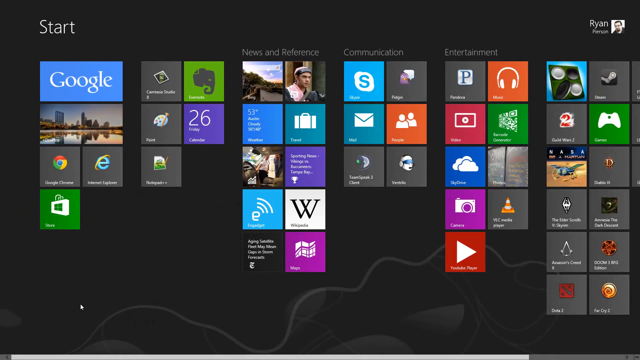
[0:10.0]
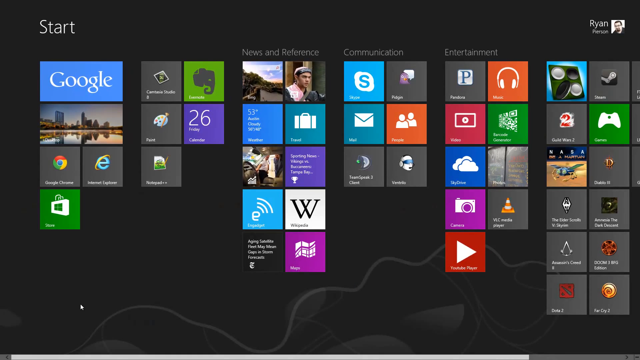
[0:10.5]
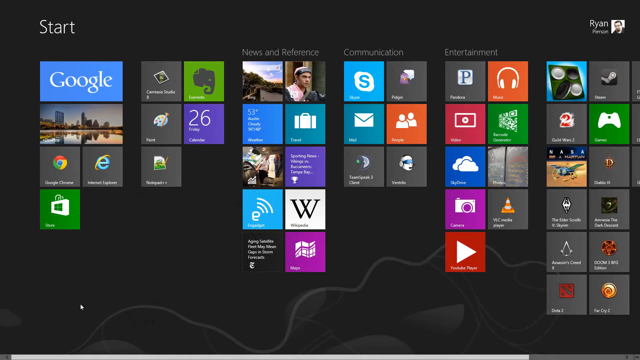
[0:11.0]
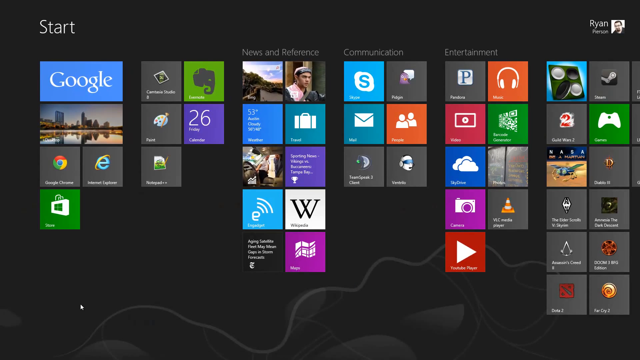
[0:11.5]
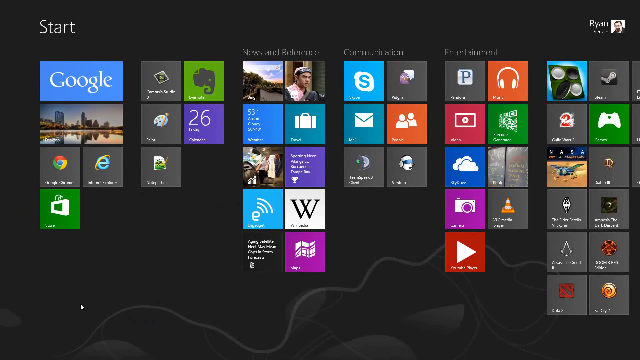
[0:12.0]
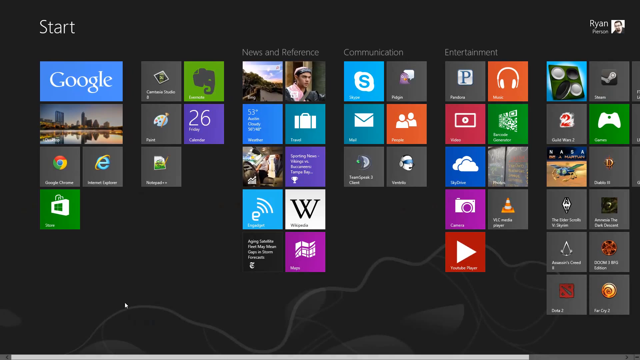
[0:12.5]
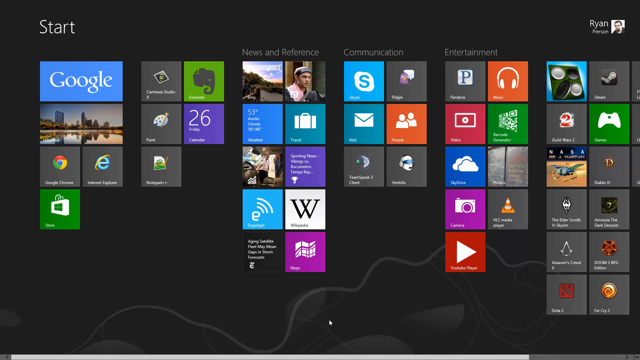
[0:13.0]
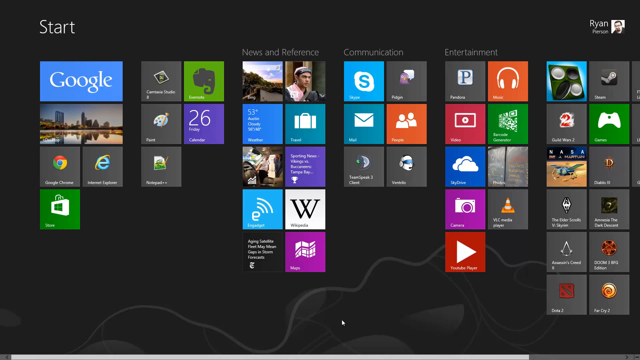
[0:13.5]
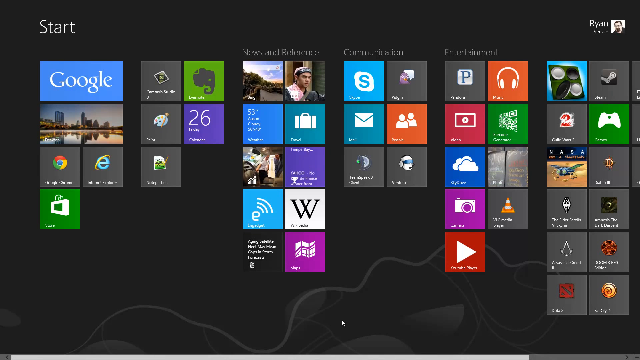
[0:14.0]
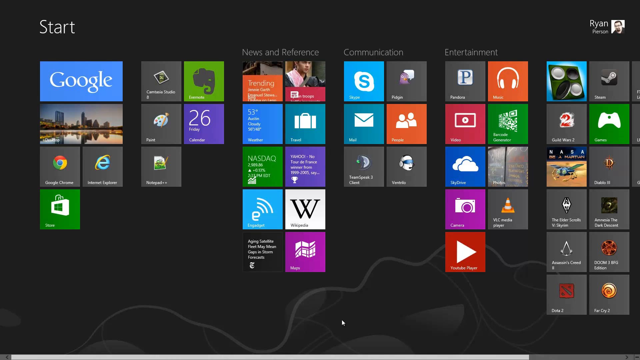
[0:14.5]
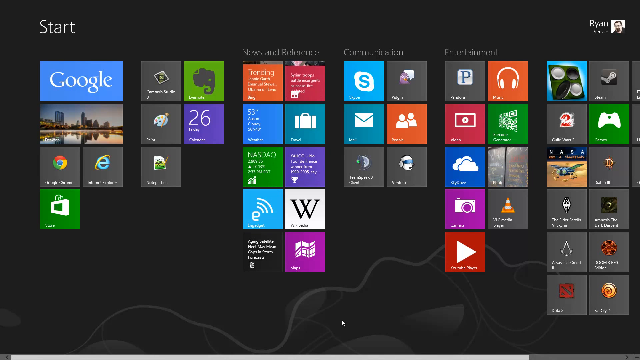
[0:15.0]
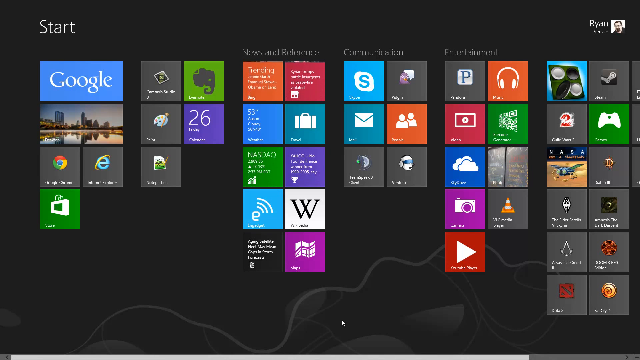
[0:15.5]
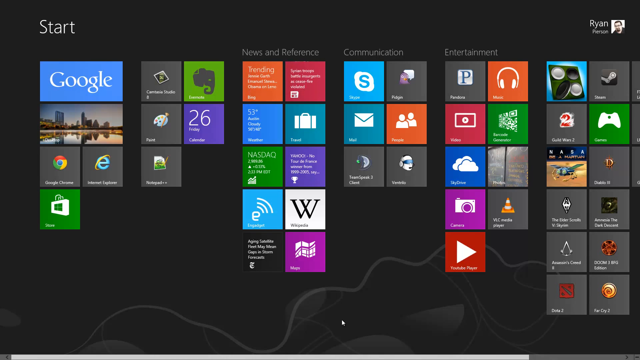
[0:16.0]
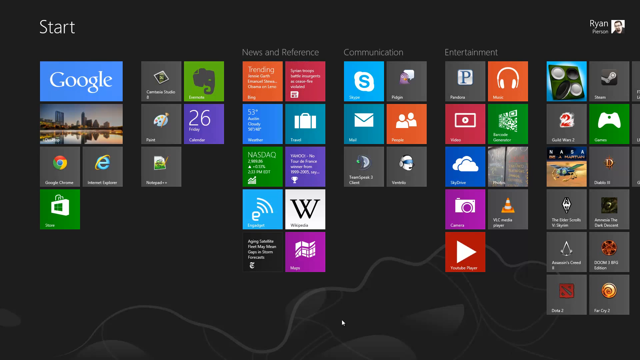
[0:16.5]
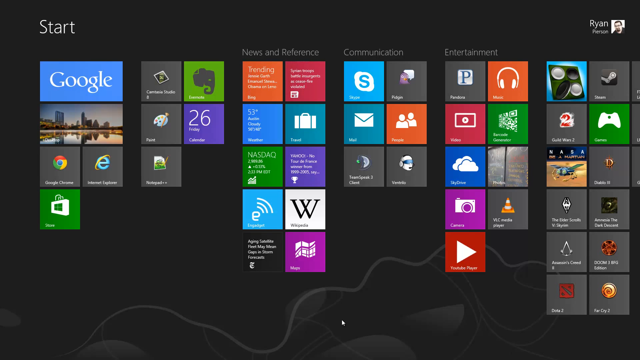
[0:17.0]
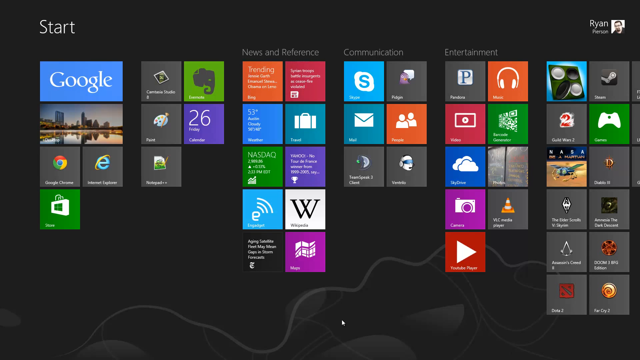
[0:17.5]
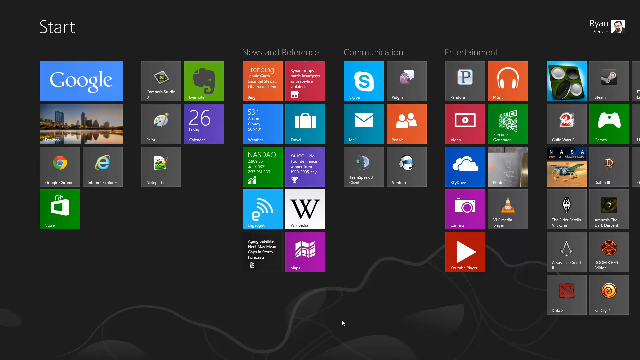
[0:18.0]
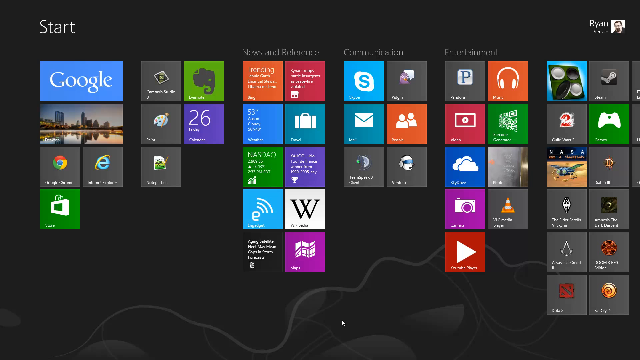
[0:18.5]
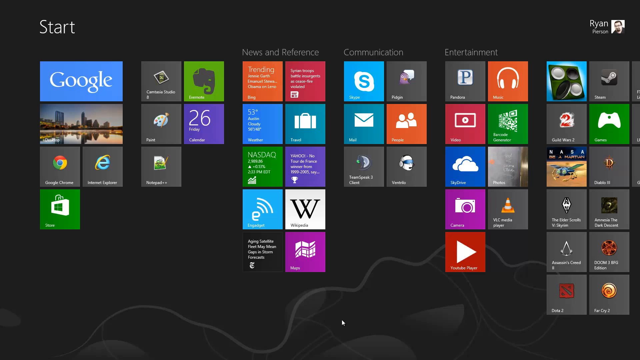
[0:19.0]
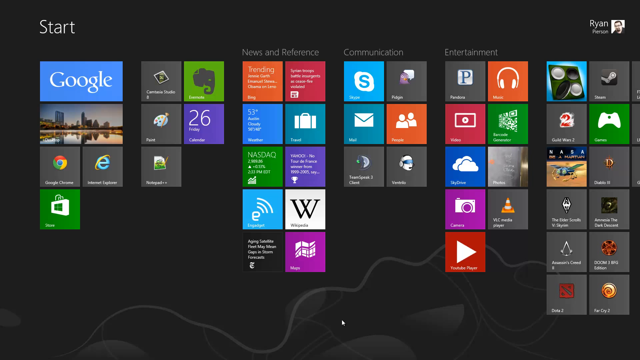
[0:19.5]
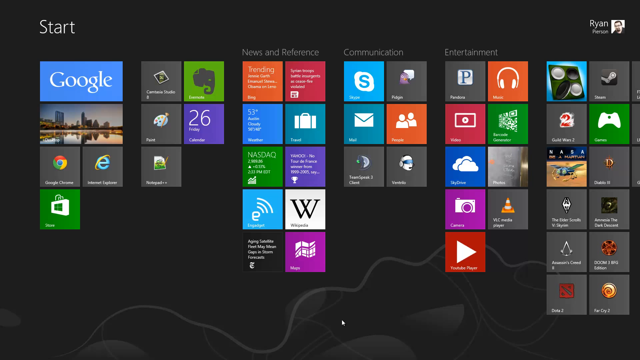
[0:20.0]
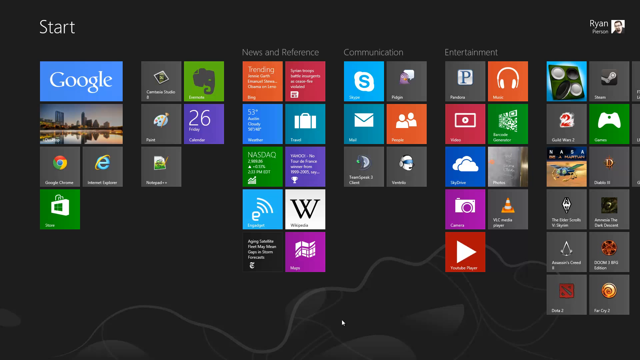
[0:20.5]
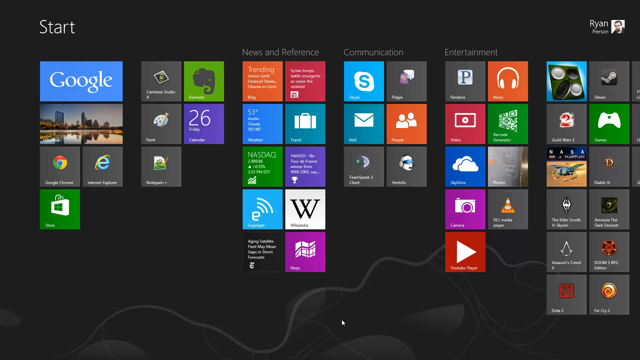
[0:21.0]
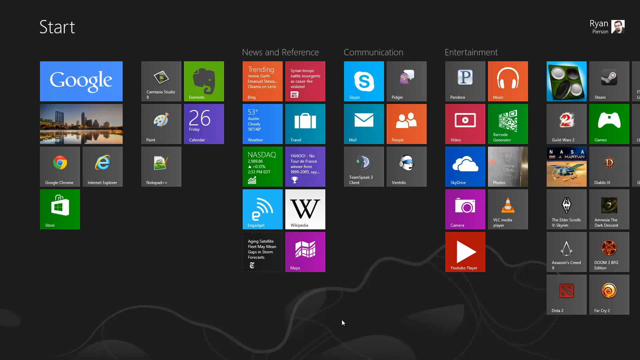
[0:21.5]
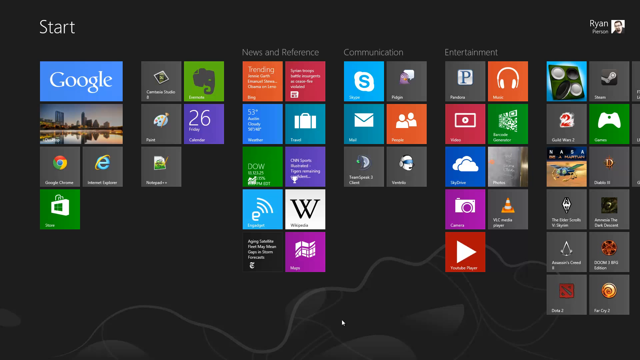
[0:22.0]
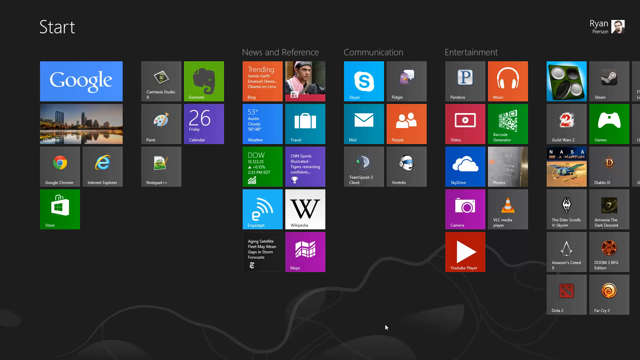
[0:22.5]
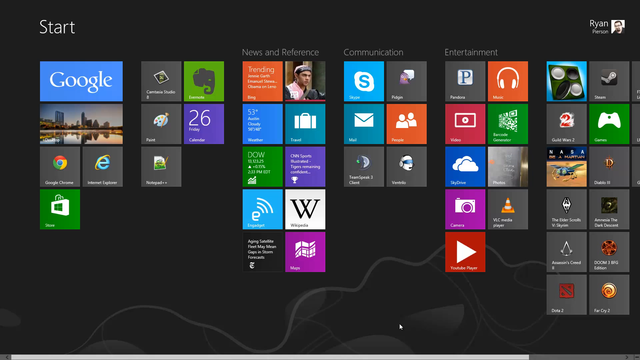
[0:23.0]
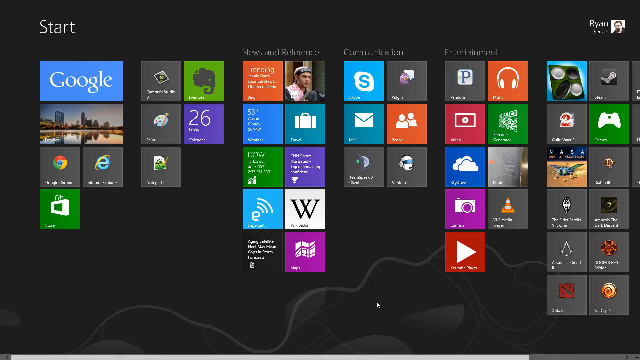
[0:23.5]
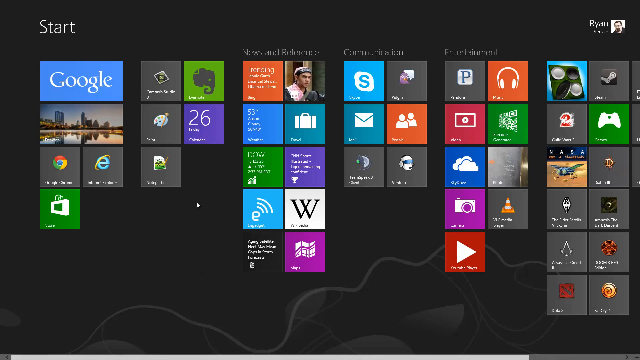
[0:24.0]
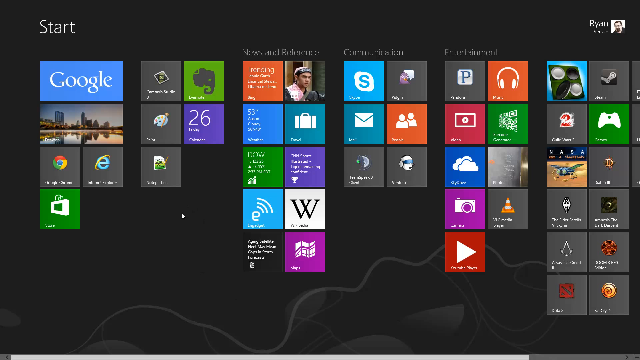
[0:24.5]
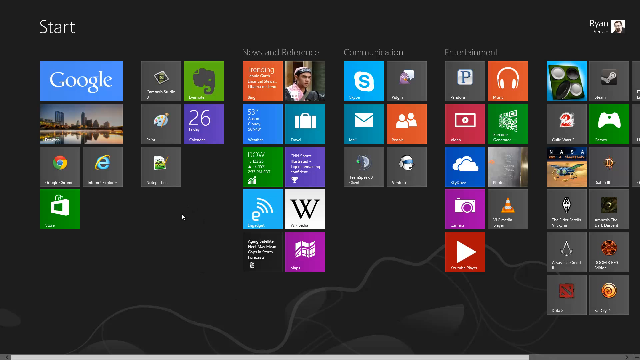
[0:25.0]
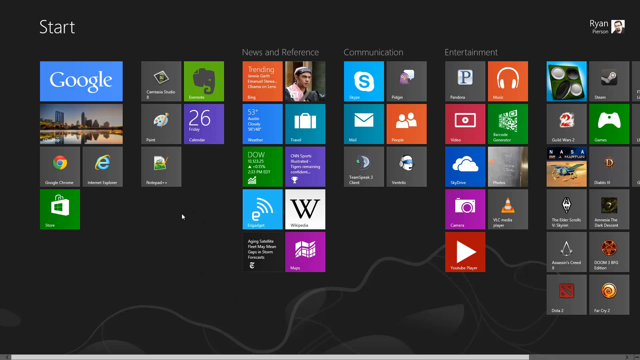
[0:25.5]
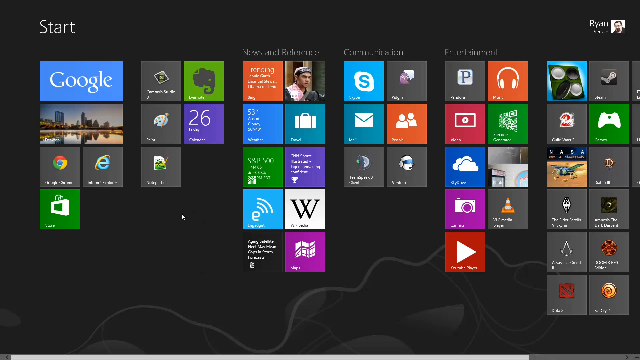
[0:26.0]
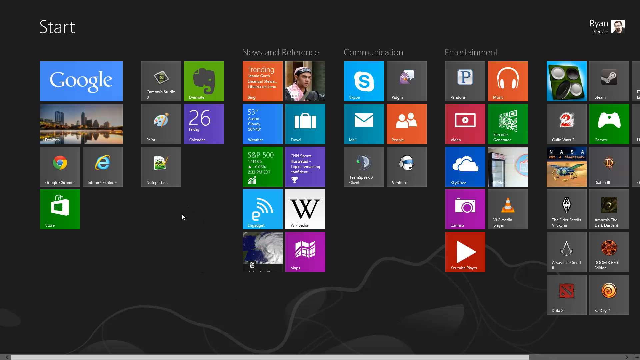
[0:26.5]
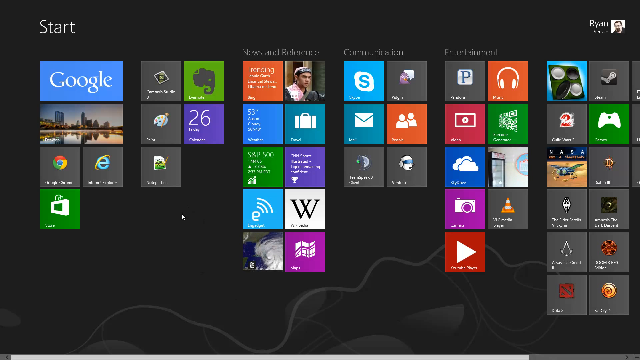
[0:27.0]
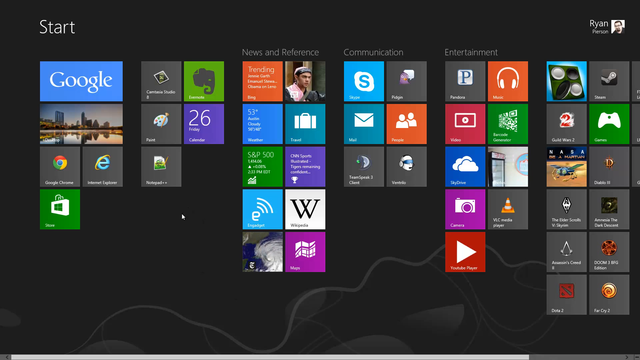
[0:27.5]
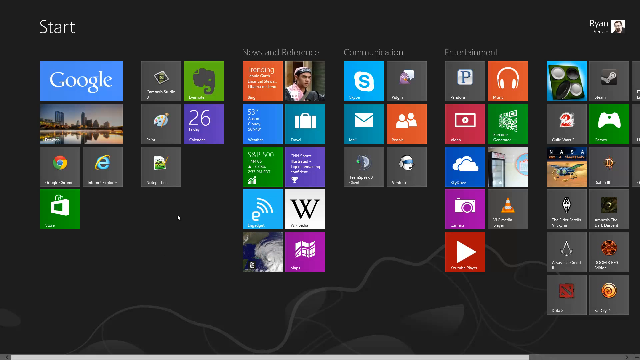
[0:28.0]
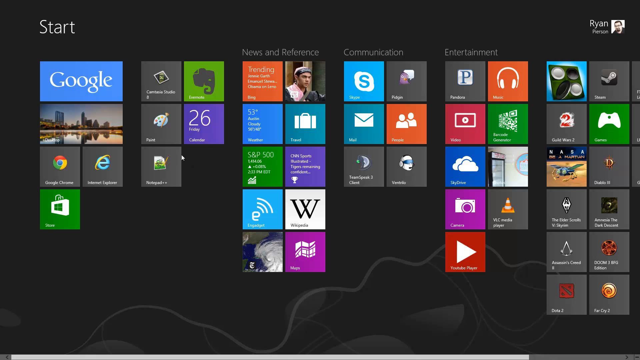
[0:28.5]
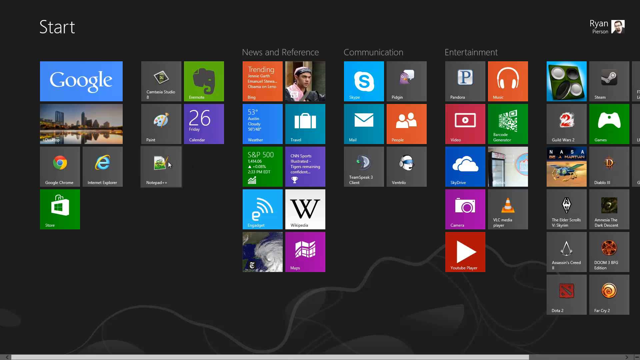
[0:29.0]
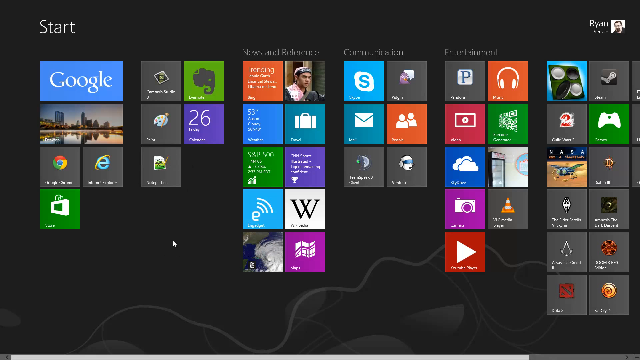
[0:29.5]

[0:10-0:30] The black screen with a huge array of different icons remains, with the profile name in the right-hand corner and "start" written in the top left corner. The screen stays like this for a while as some of the Windows 7 live tiles flip between images and brief information, and the photos icon occasionally switches to different photos. After a while the cursor is moved and swirled around, but it does not click on anything. The live tiles continue to flip around and show different information. Some of the tiles are double-sized, such as one image tile and the Google tile, while the rest are all the same size. Most of the tiles are gray, but around 40% of them are different colours, mostly blue, orange, purple or green, with a few tiles in other colours.